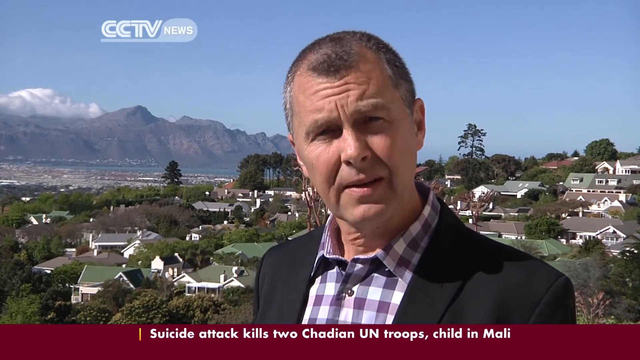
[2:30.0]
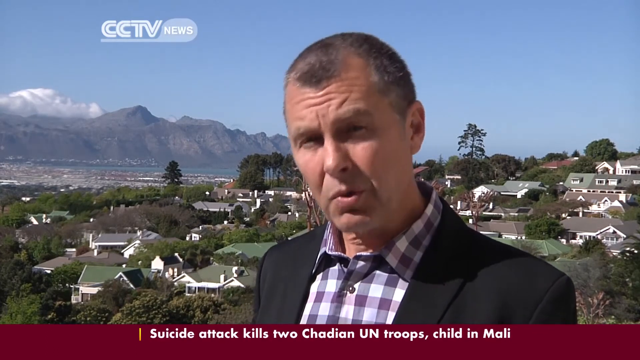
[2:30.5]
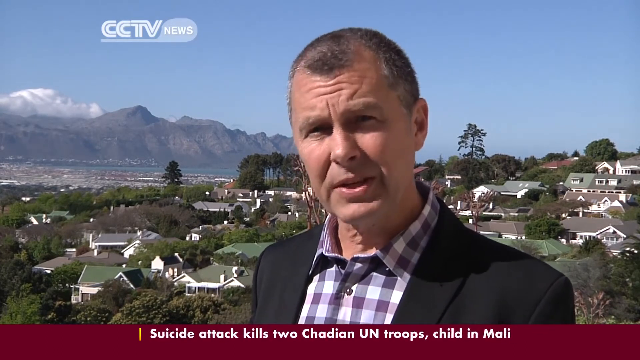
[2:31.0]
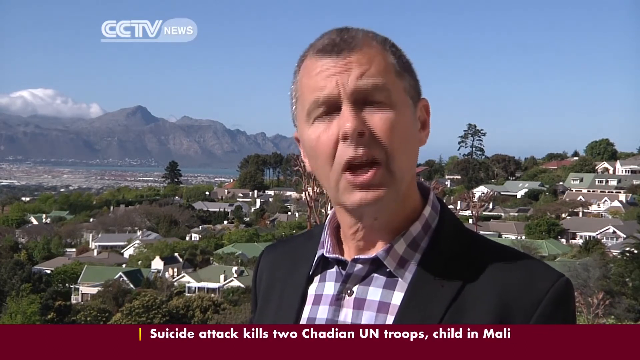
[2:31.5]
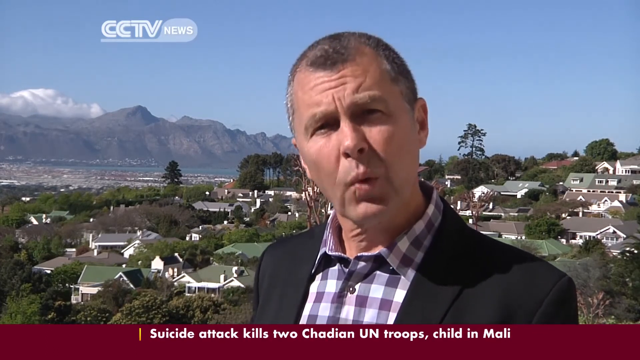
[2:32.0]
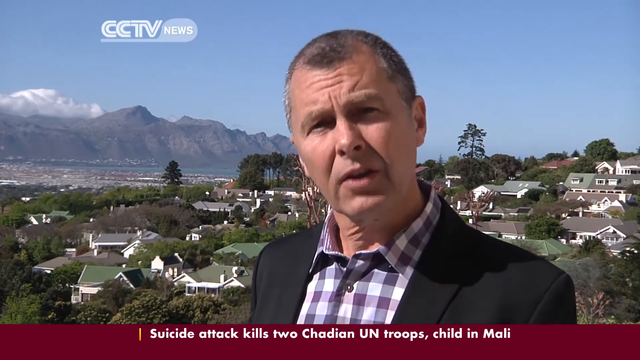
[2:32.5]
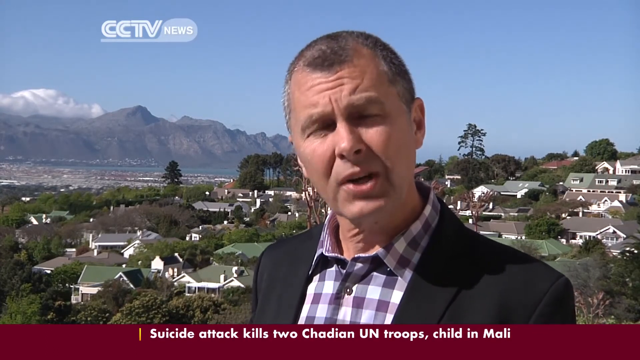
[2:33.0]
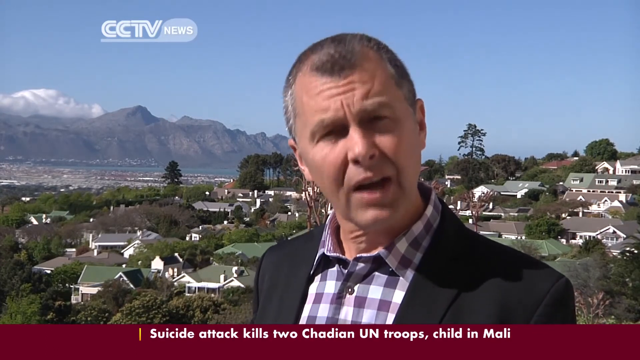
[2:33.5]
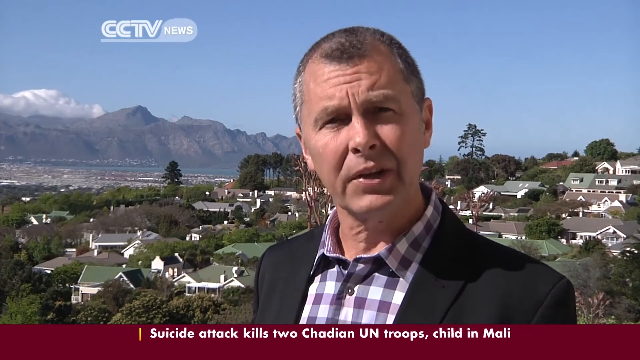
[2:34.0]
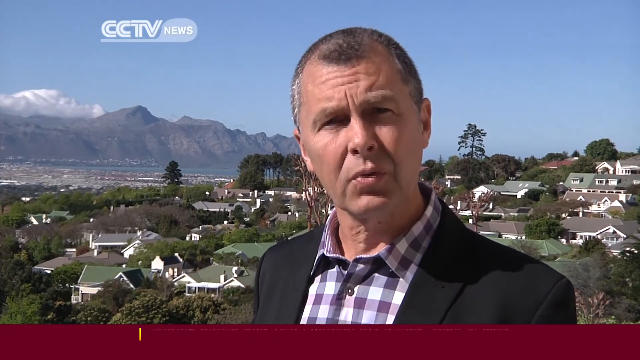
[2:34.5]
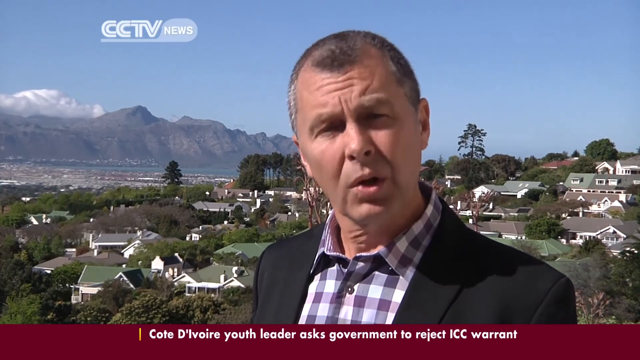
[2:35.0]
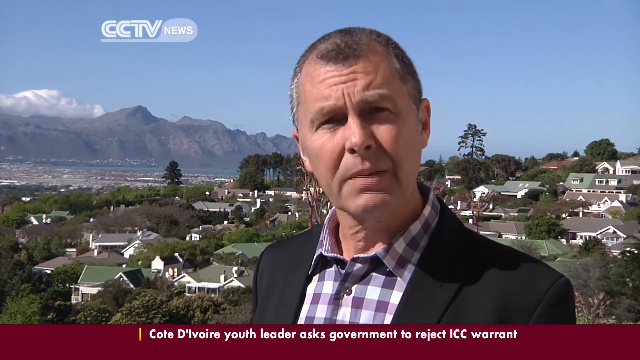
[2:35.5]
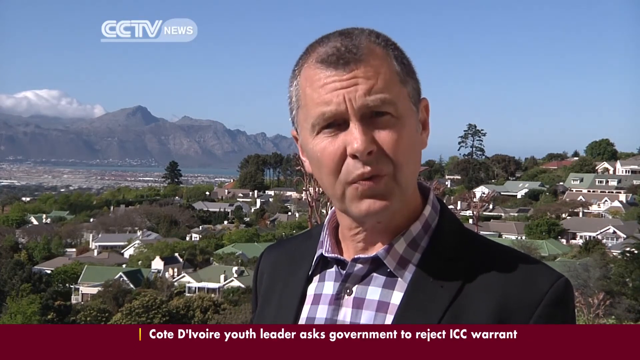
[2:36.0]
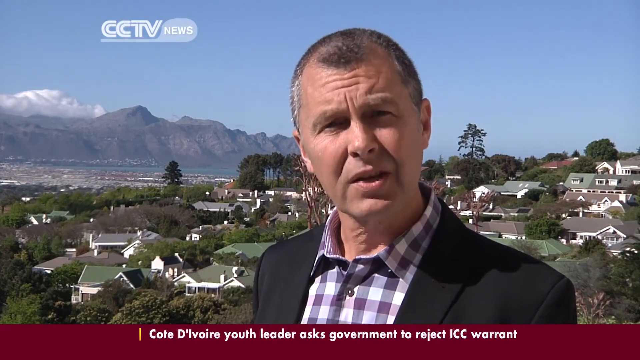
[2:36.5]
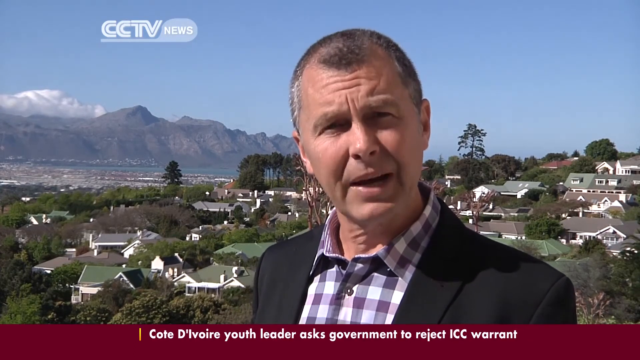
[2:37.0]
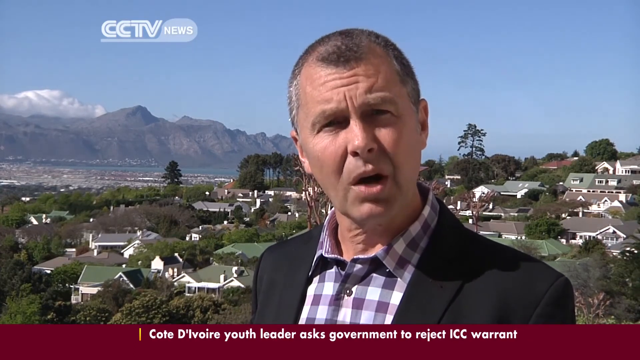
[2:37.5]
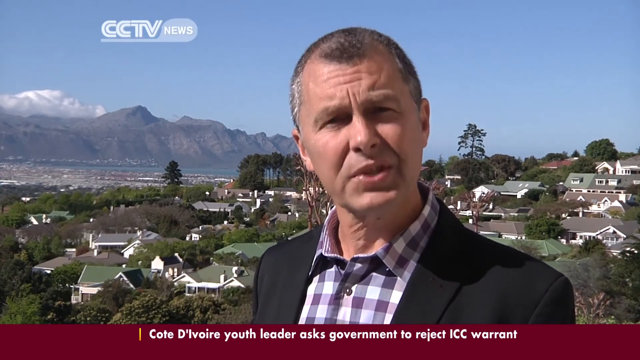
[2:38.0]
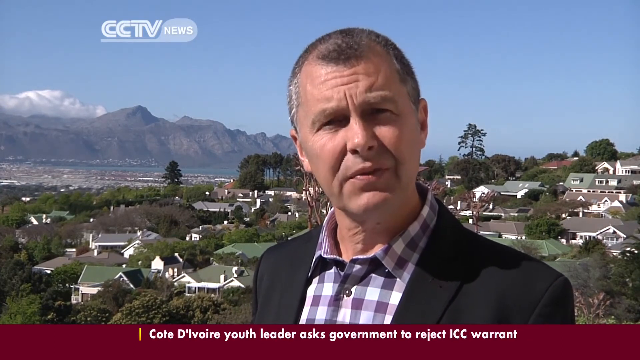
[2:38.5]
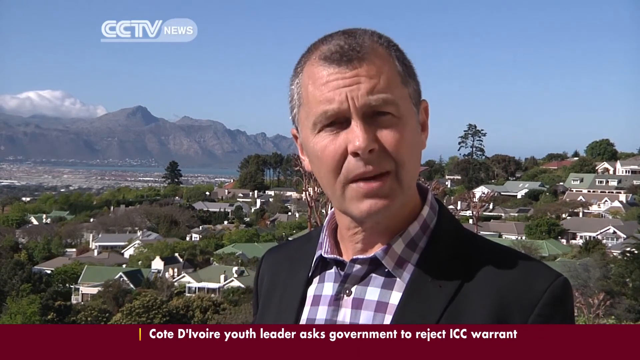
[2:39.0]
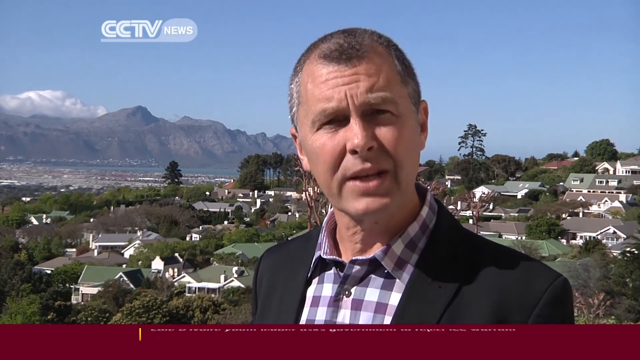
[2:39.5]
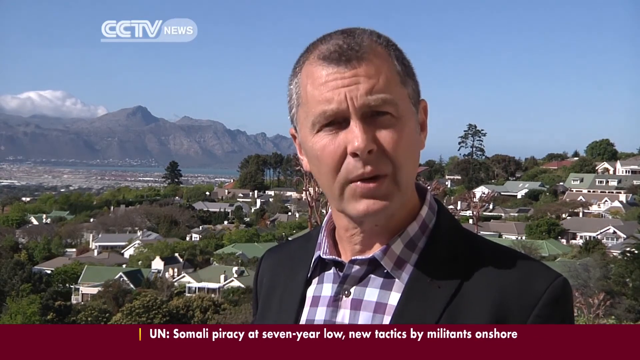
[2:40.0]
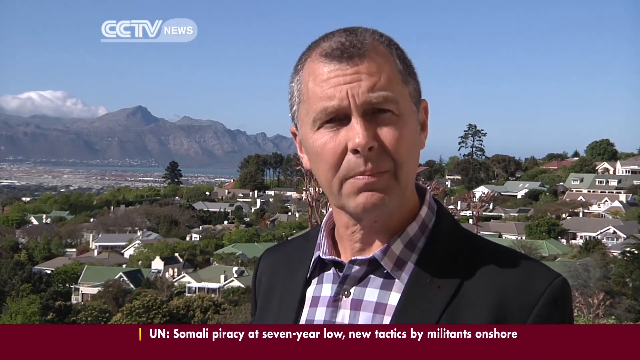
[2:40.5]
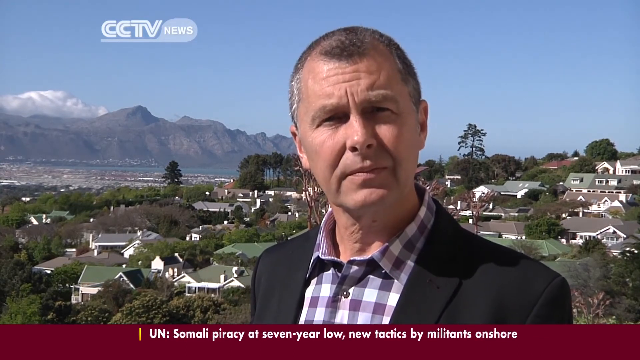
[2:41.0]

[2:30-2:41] The newscaster in South Africa stands where he stood before and talks throughout. From where he stands, the view looks out over the tops of the houses in an aerial view. Conifers grow in the background, and beyond them the landscape looks like nothing but houses filling a little valley. At the edge of the trees there appears to be a river. Beyond that is a range of mountains that come to peaks, with clouds peeking a little over the range. He wears a purple shirt with the top button unbuttoned and what looks like a black suit coat, and his hair is very short and receding, with some gray.